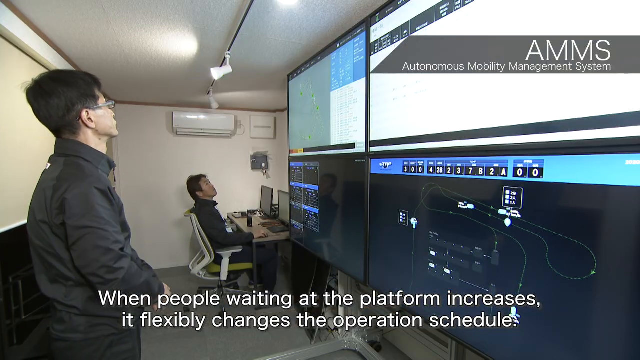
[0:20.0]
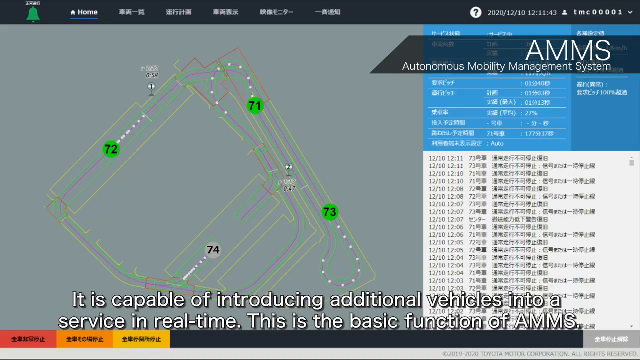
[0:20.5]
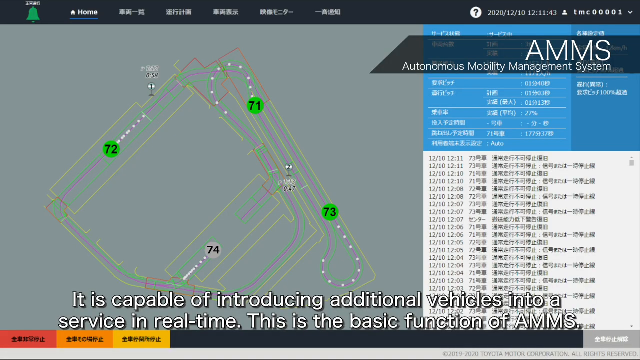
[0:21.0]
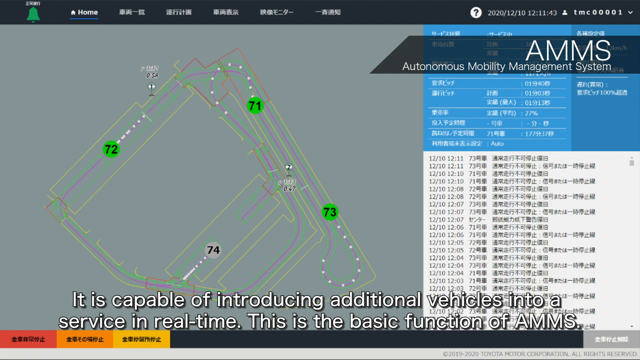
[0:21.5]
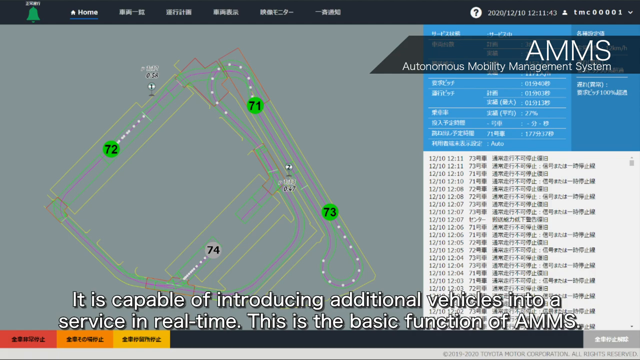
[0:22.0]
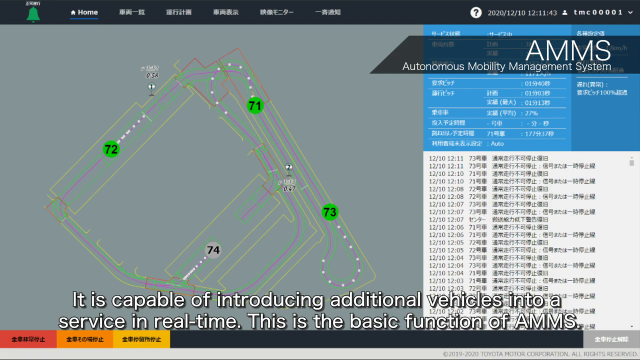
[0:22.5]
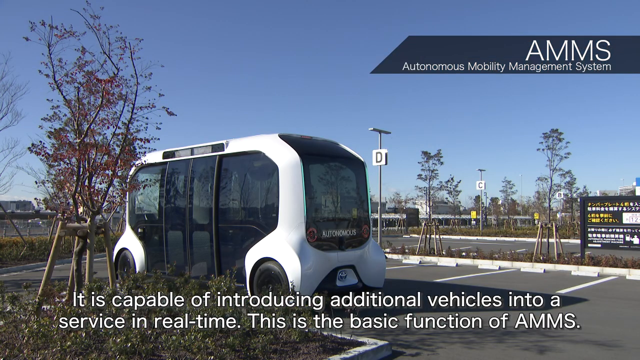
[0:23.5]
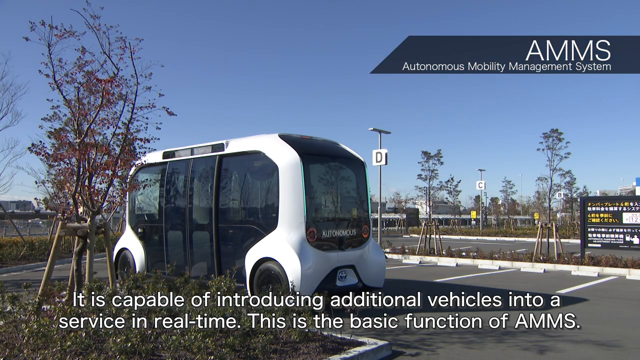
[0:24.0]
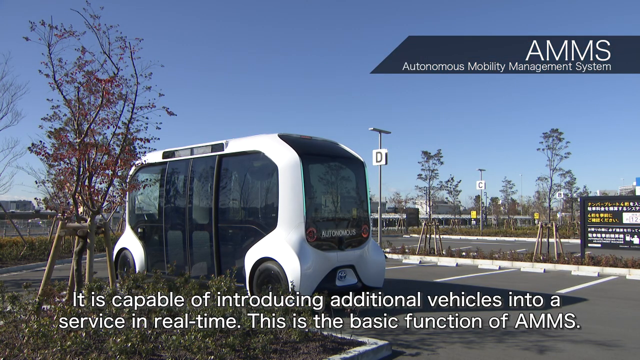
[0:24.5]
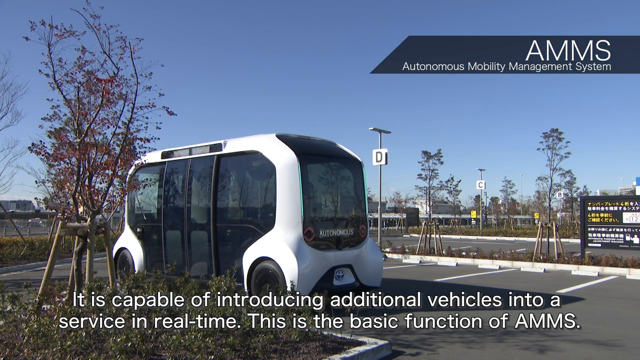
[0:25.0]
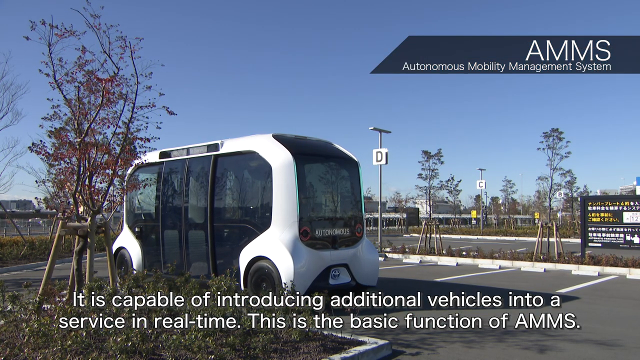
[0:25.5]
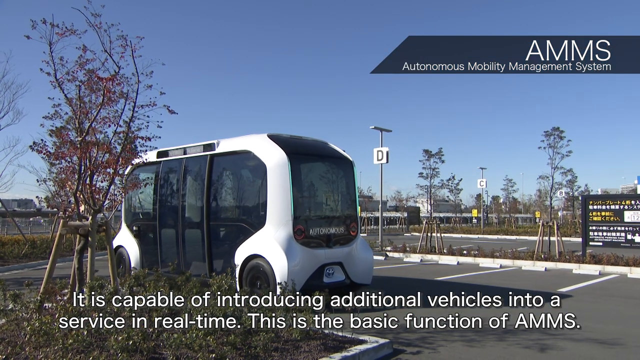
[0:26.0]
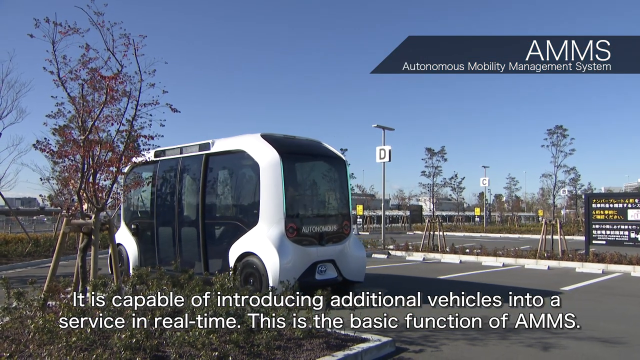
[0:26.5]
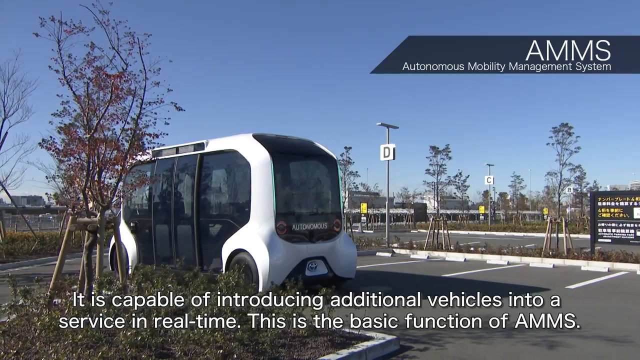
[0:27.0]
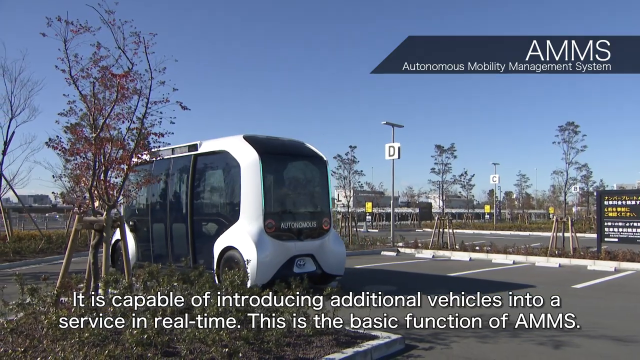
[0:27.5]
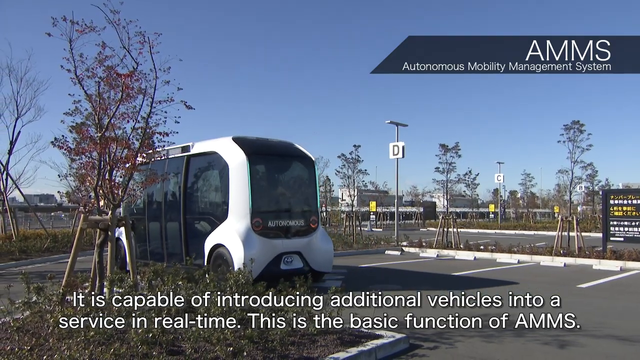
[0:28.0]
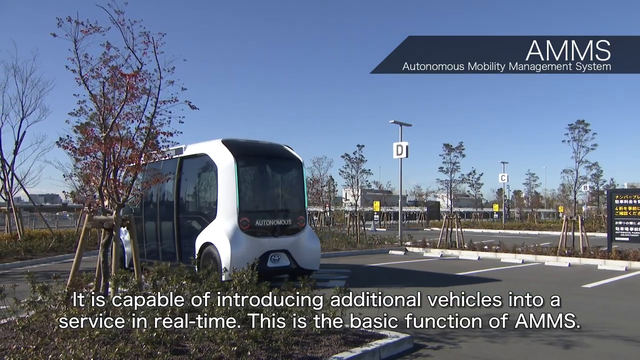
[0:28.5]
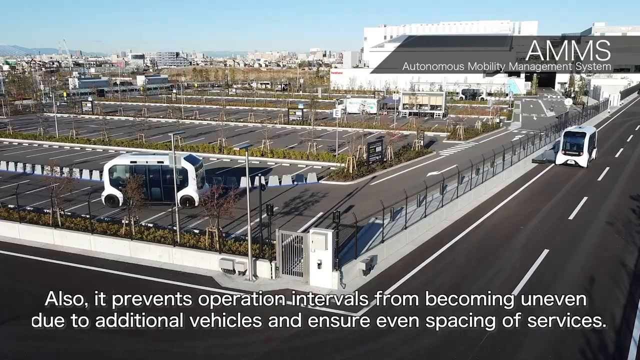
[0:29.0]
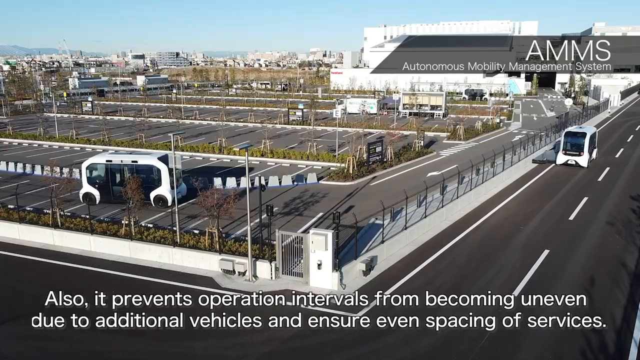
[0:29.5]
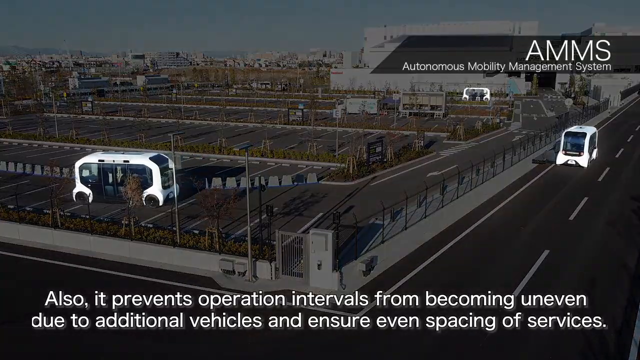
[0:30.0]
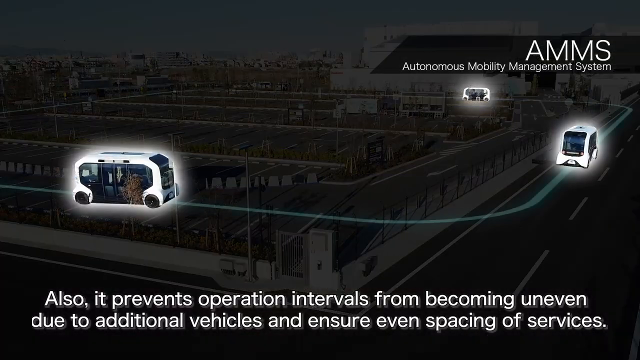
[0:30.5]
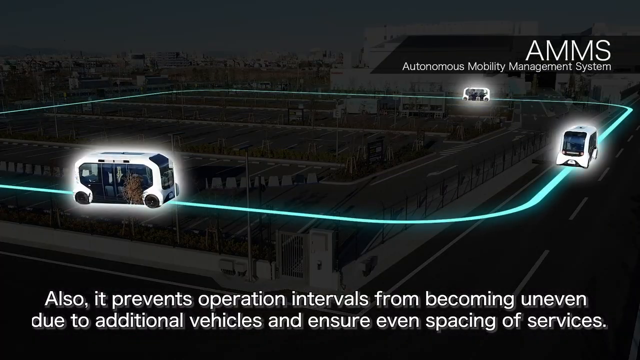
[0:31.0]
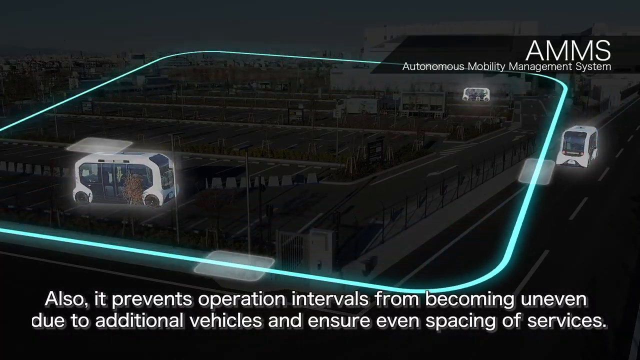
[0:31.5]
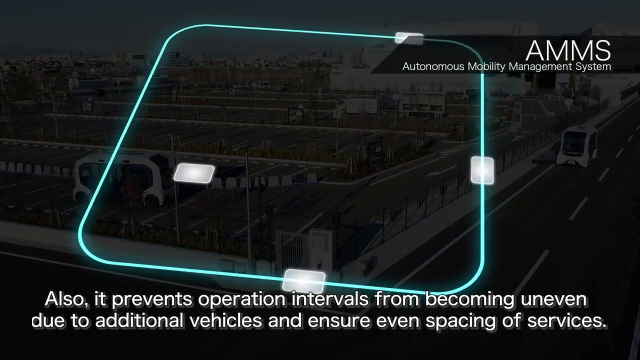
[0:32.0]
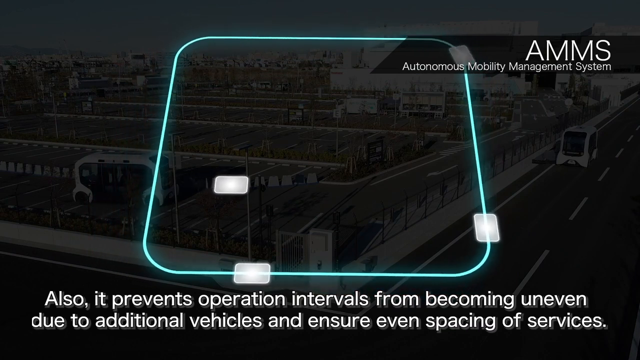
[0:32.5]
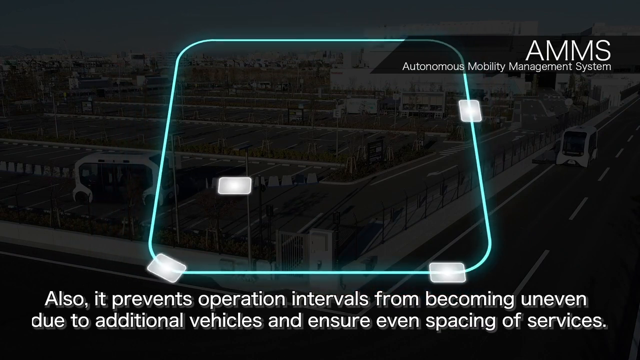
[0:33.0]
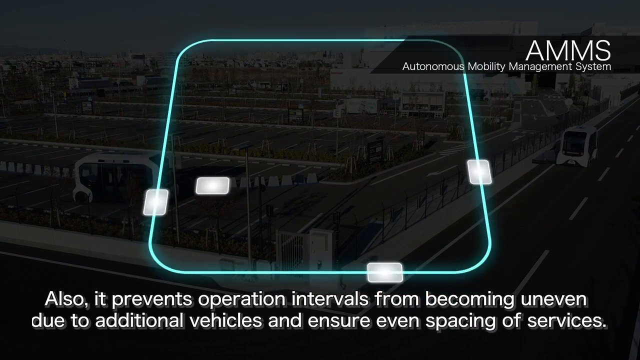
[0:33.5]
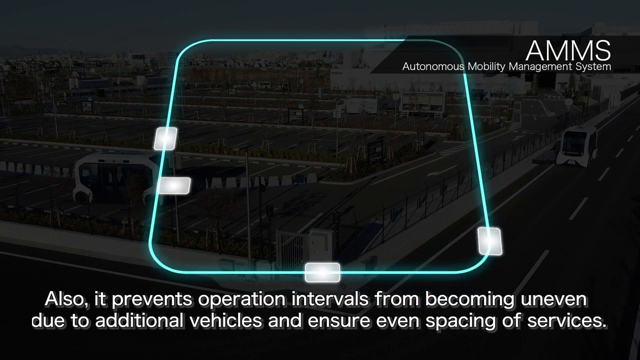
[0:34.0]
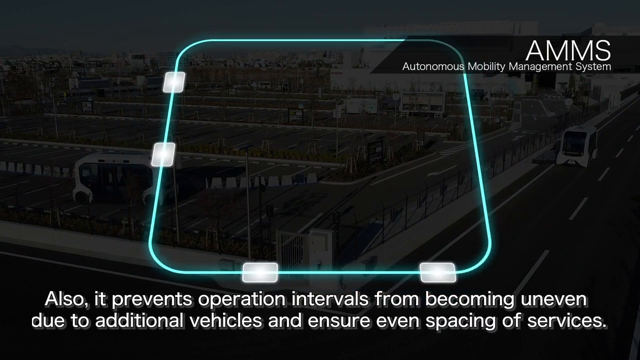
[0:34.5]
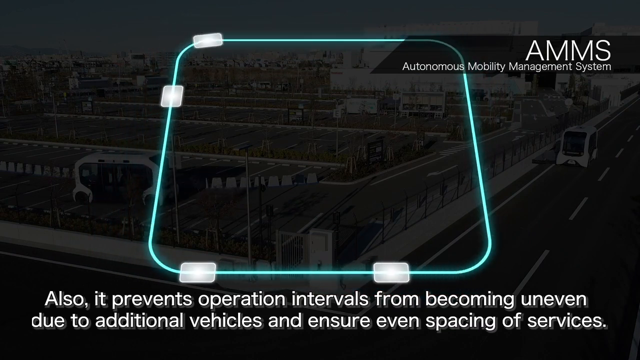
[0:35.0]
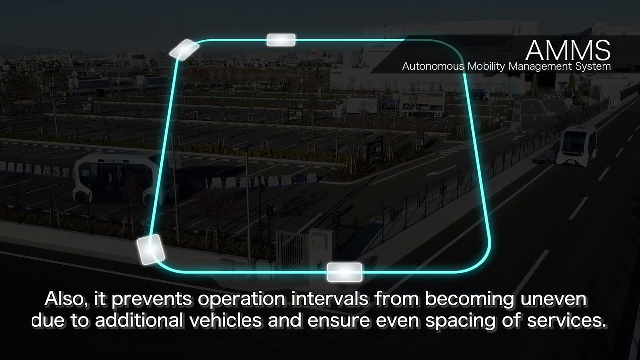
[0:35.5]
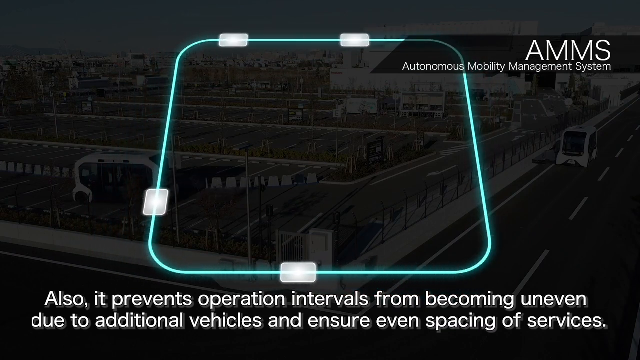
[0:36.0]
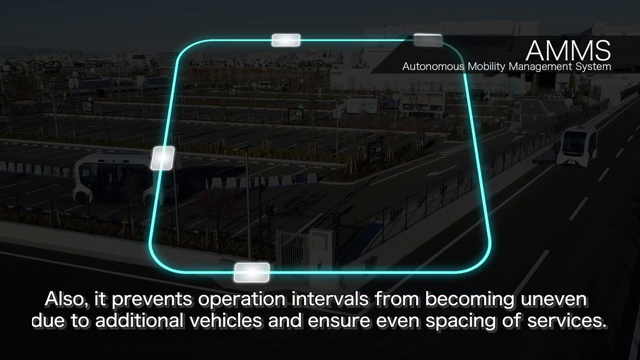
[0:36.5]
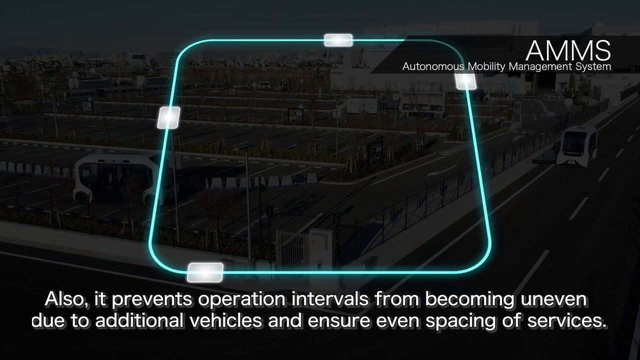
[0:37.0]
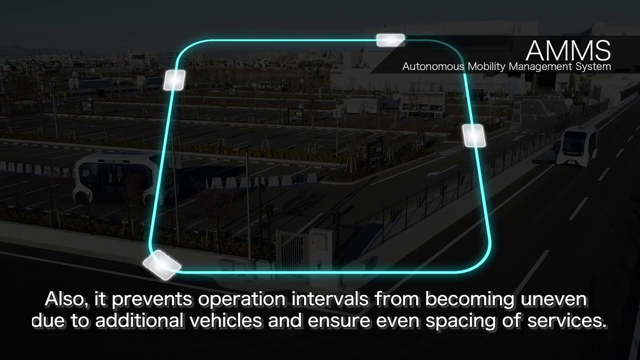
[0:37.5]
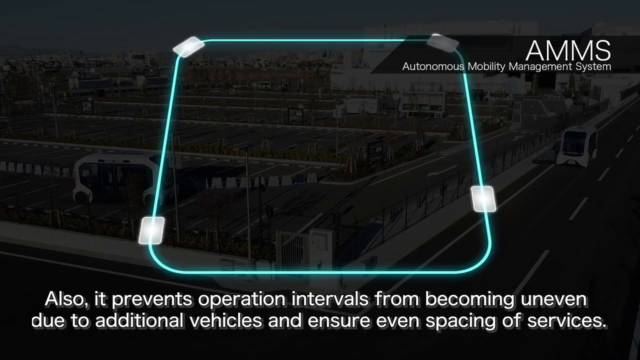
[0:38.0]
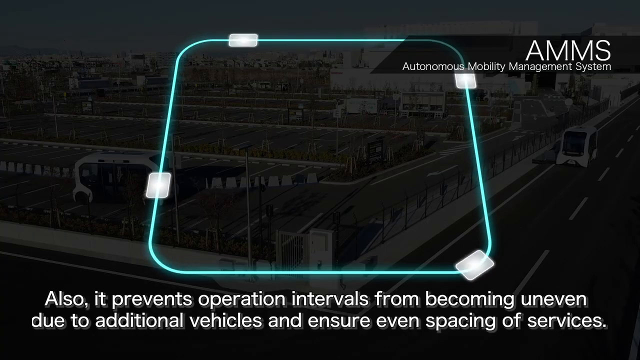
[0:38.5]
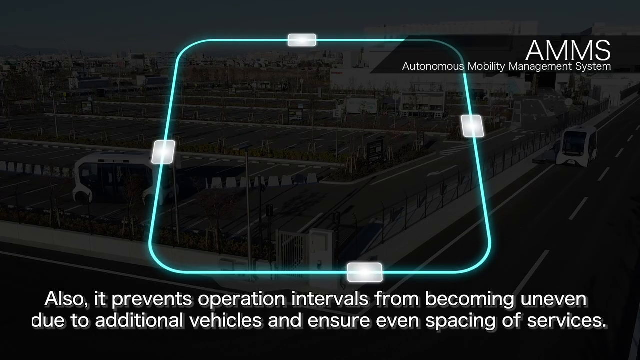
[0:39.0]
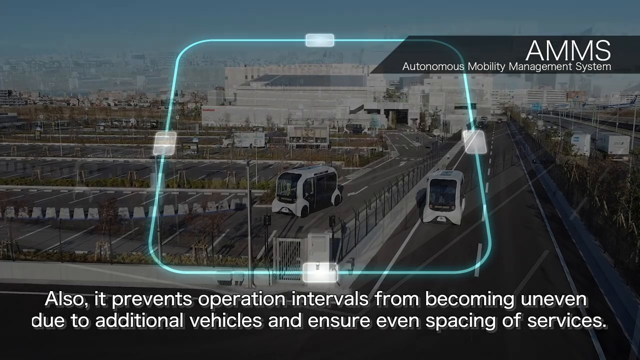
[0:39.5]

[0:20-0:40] One man is sitting in the back of the room and another is sitting in front of four monitors, which appear to show the bus's route. A map appears showing the different bus stops along with a comprehensive report of each time the vehicle made a movement. In another shot, the bus moves slowly through a parking lot. There is a Toyota logo on the bus, suggesting it seems to be a Toyota product. A lit-up animation shows the four buses driving around the parking lot, illustrating that the vehicles keep even spaces between them so they don't crash into each other. The buses are very symmetrical looking and have the word "Autonomous" on the back. A caption mentions that the system provides additional vehicles to ensure intervals do not become uneven.